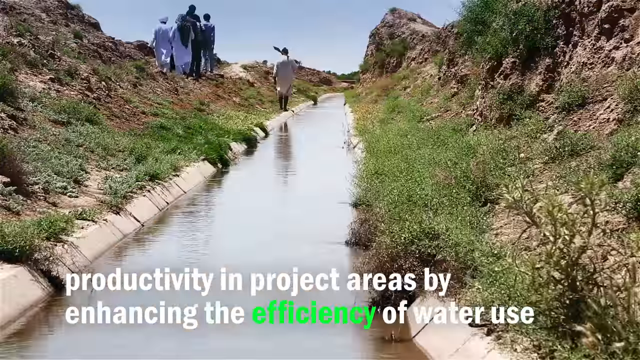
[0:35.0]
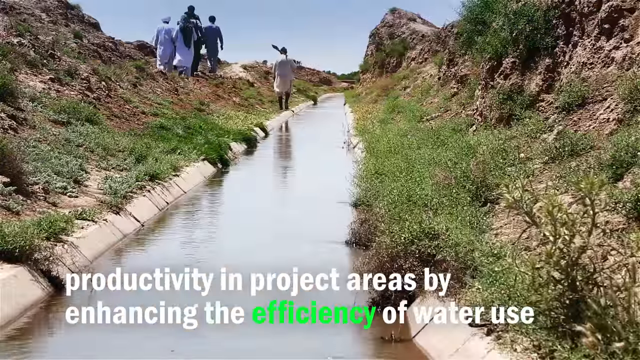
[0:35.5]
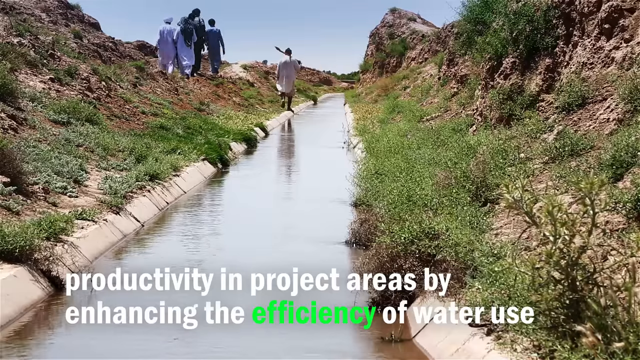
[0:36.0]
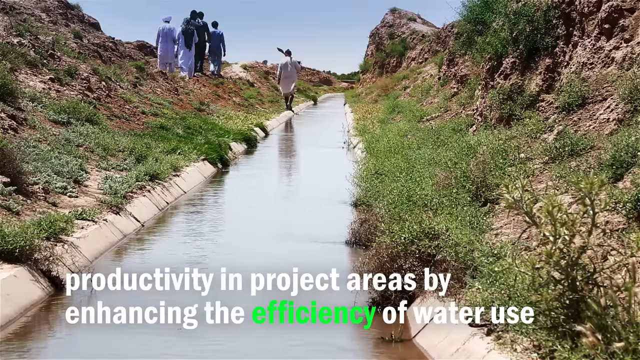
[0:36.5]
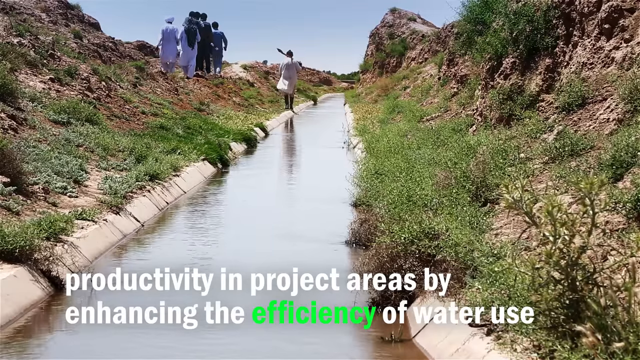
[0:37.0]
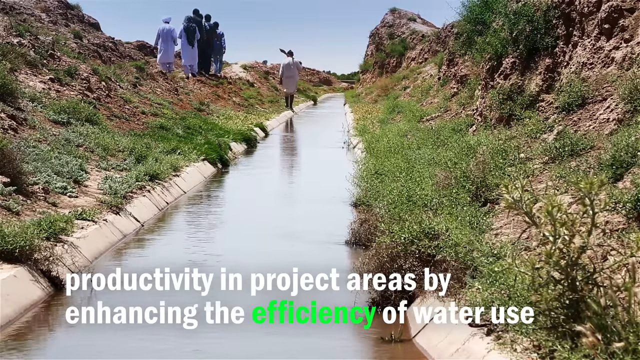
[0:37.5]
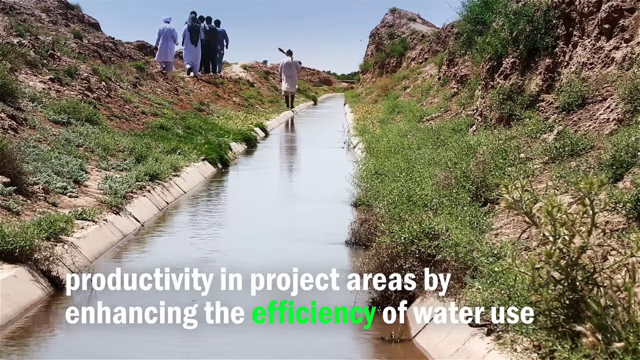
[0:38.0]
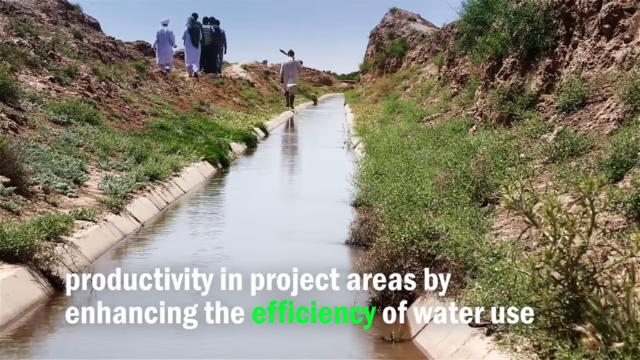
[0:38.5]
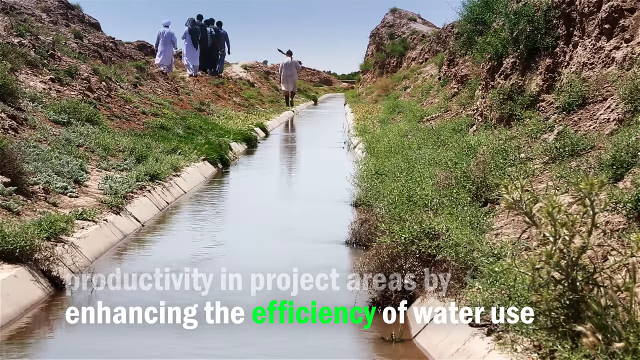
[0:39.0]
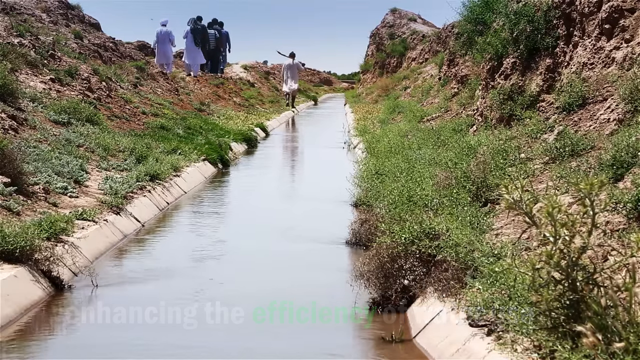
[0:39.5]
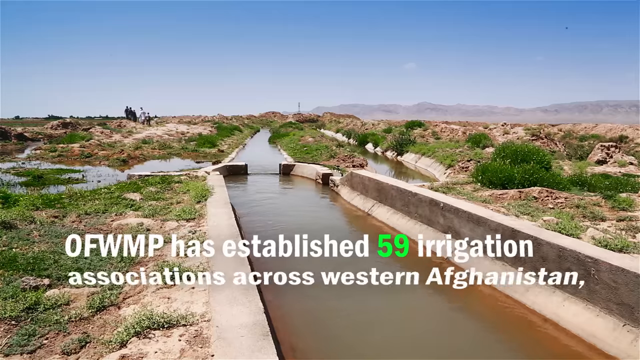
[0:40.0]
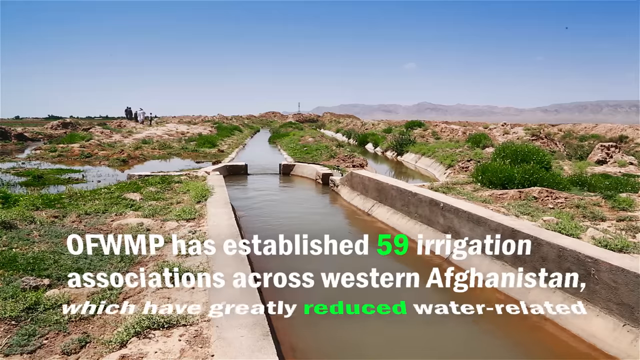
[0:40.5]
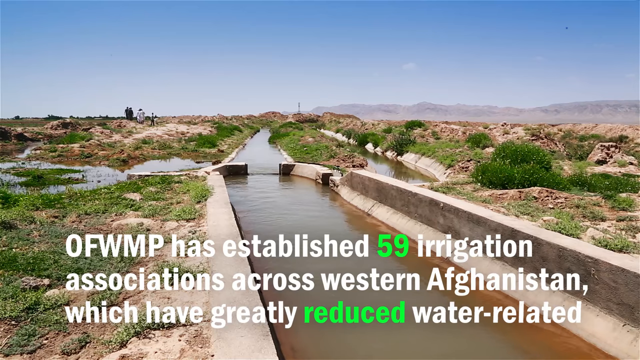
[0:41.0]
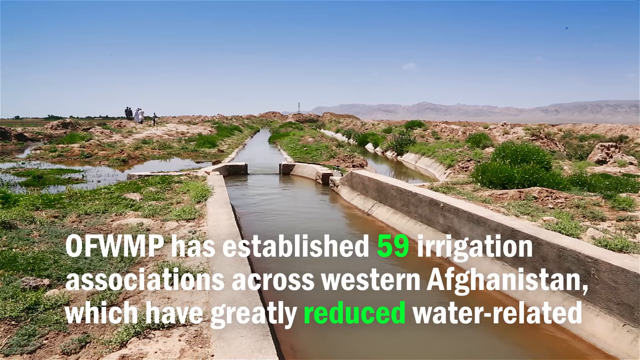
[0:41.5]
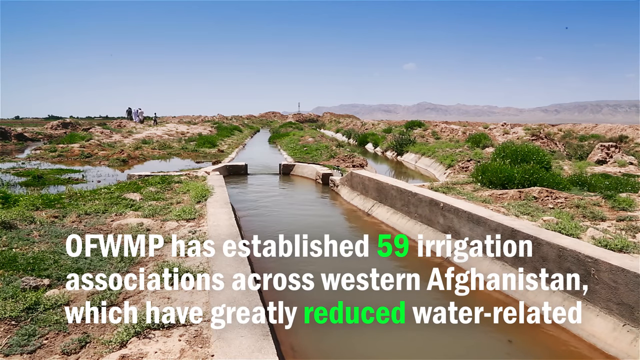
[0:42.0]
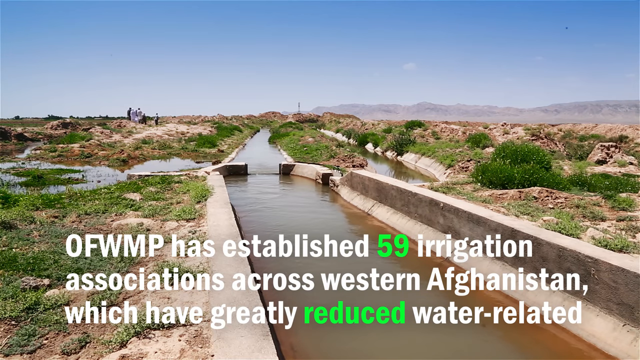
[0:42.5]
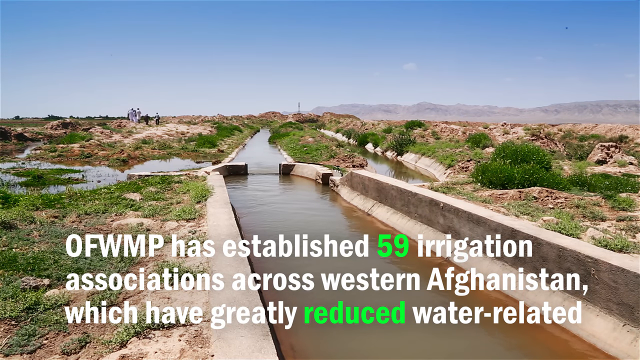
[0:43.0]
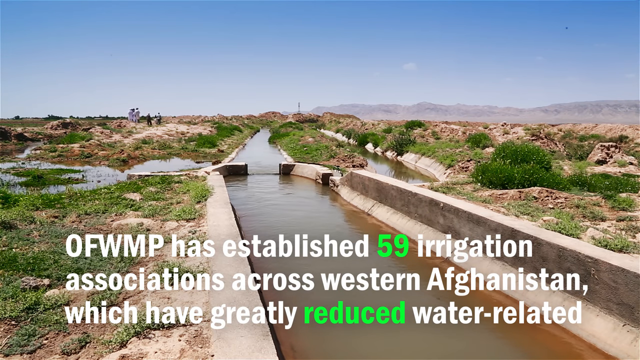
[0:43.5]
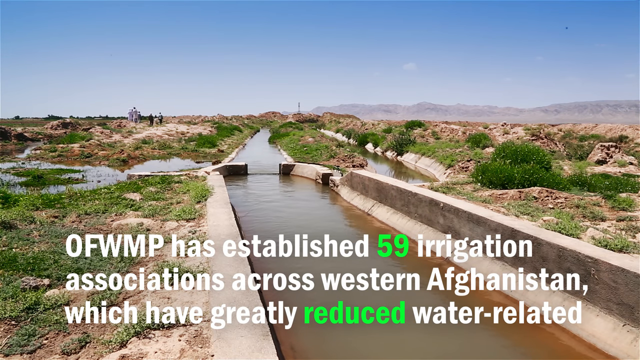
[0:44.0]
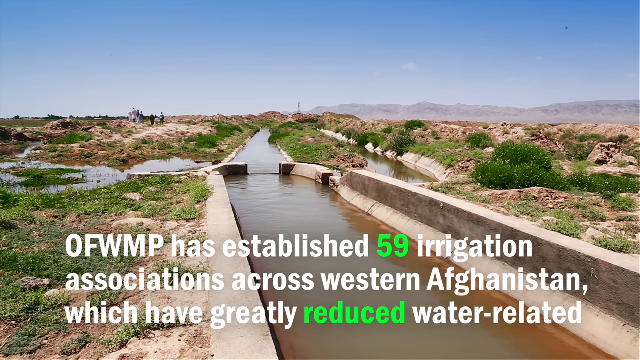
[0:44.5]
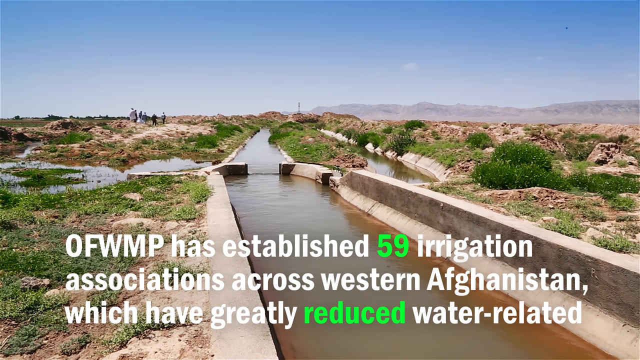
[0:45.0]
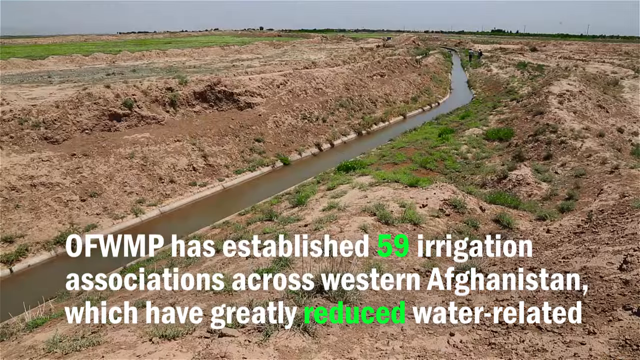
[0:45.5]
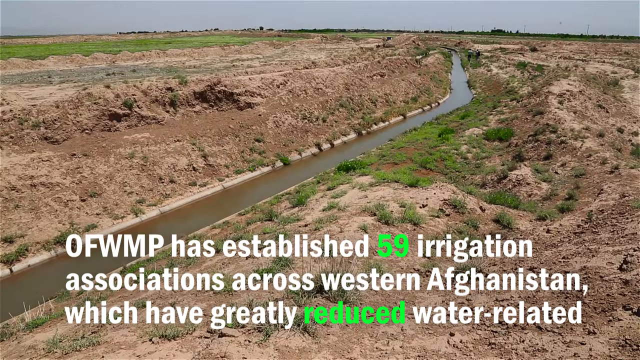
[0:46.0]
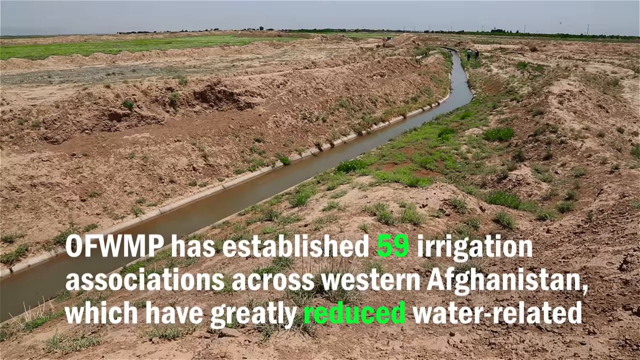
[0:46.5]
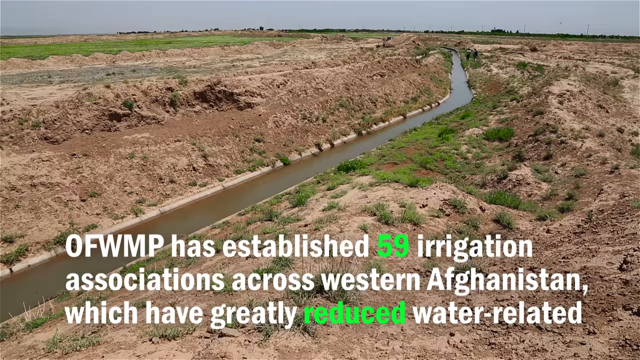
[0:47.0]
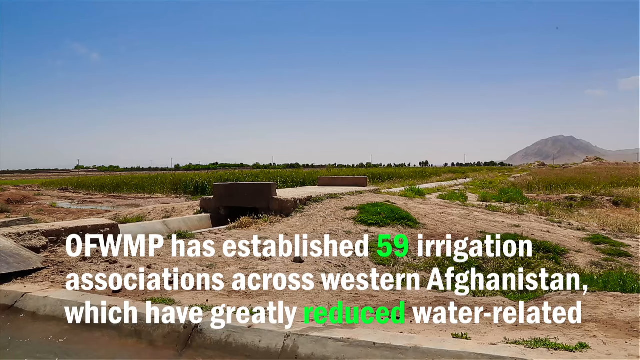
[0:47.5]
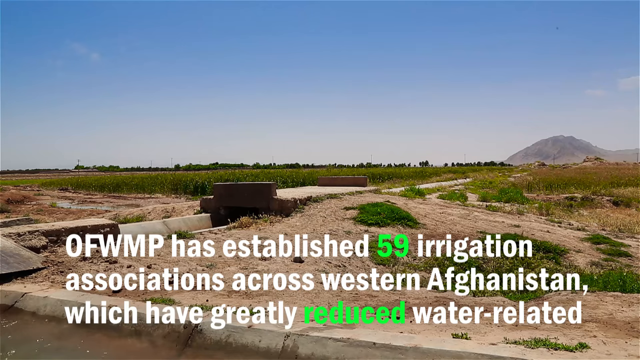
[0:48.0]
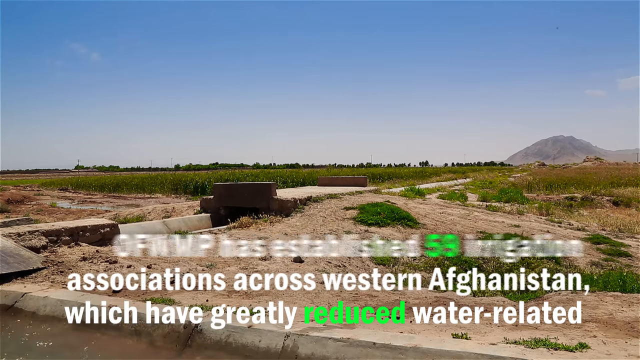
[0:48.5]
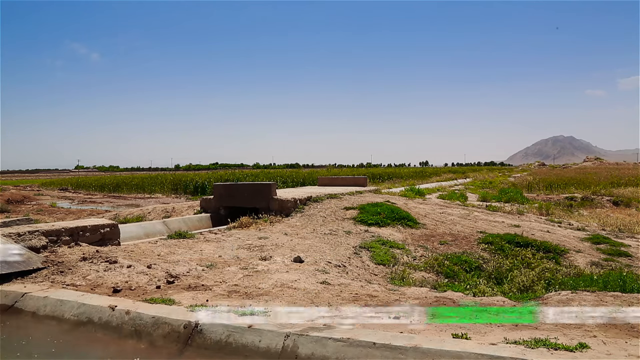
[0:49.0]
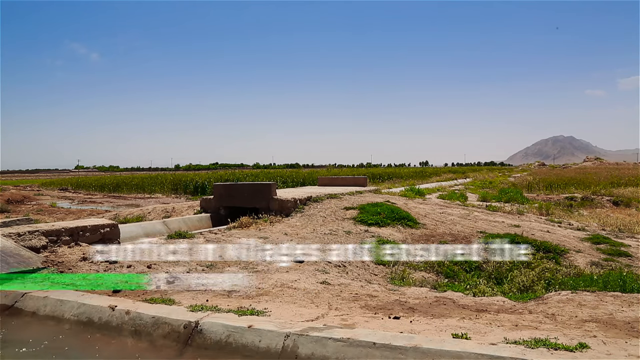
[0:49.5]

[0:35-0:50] On-screen text reads "productivity in project areas by enhancing the efficiency of water use." The camera then shows people walking alongside the canal, apparently six of them: one is close to the canal, while the others are huddled in a group on top of the hillside to the left of the canal. The camera switches to another shot of the canal as text folds down in an animated fashion, reading "OFWMP has established 59 irrigation associations across western Afghanistan which have greatly reduced water related." The scene switches again, and text slides in from the left reading "productivity in project areas by enhancing the efficiency of water use."